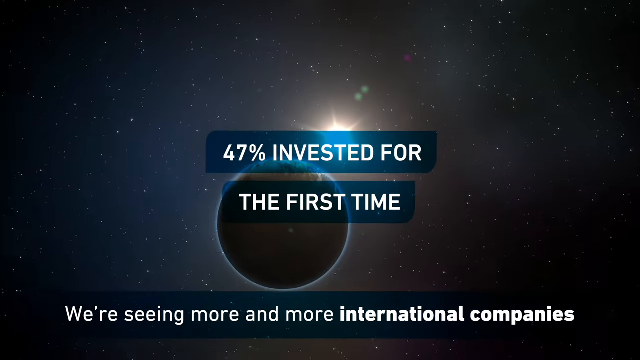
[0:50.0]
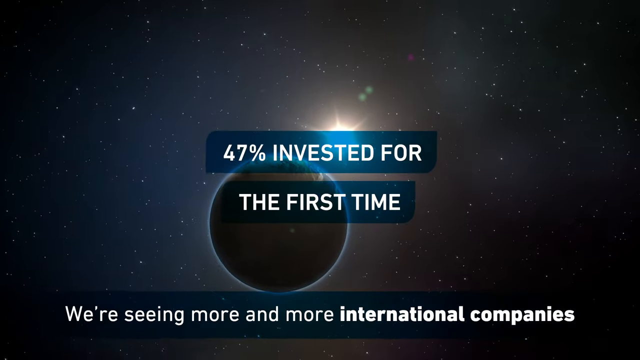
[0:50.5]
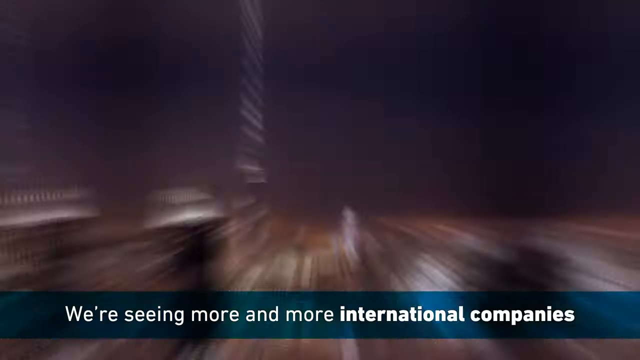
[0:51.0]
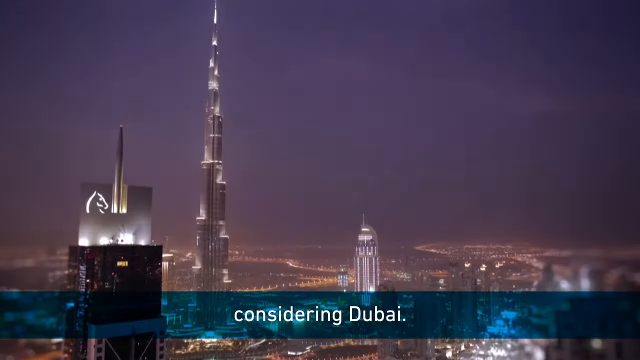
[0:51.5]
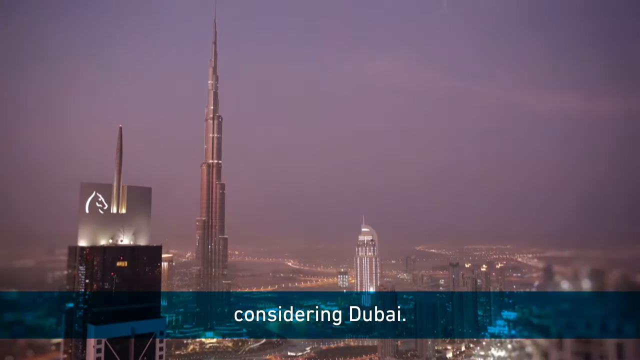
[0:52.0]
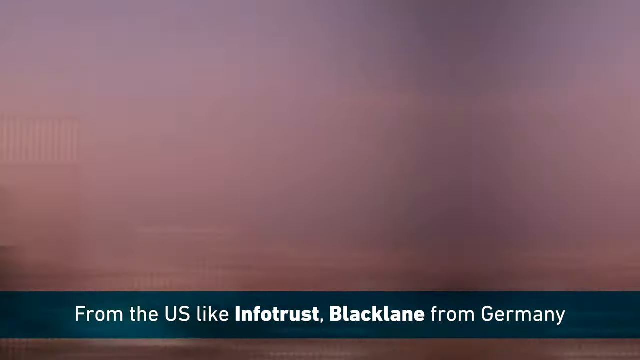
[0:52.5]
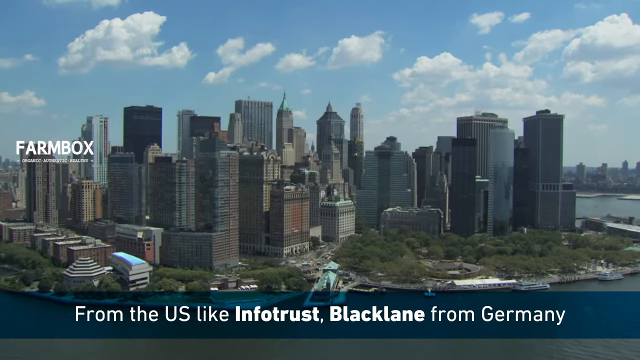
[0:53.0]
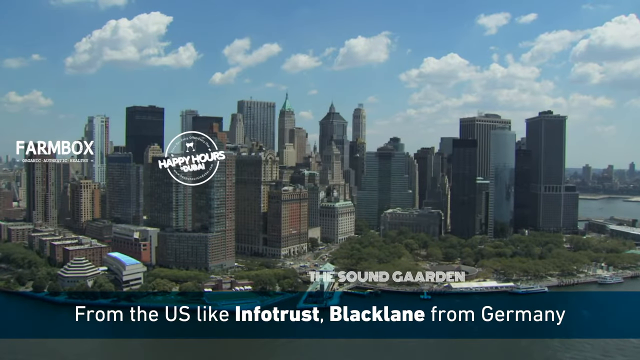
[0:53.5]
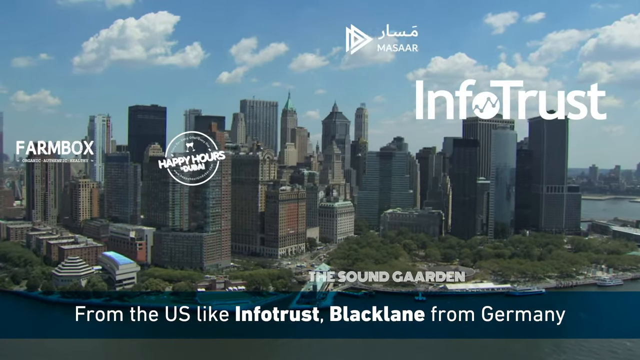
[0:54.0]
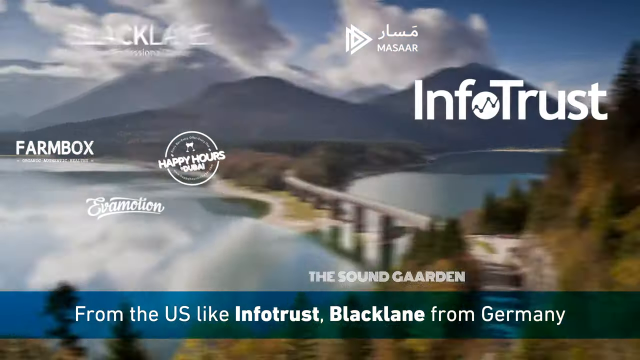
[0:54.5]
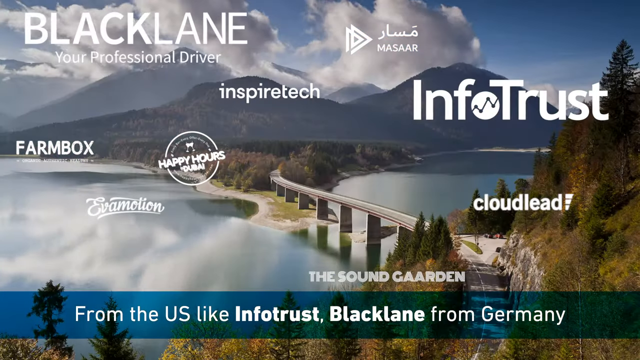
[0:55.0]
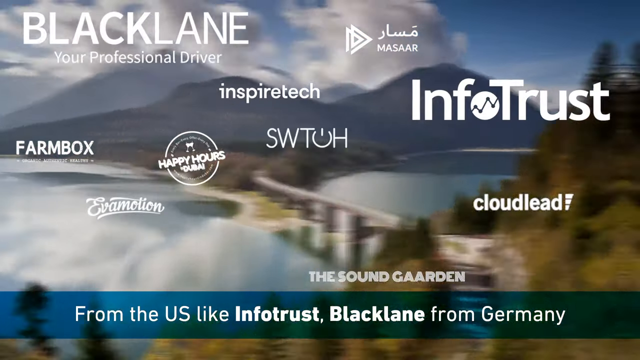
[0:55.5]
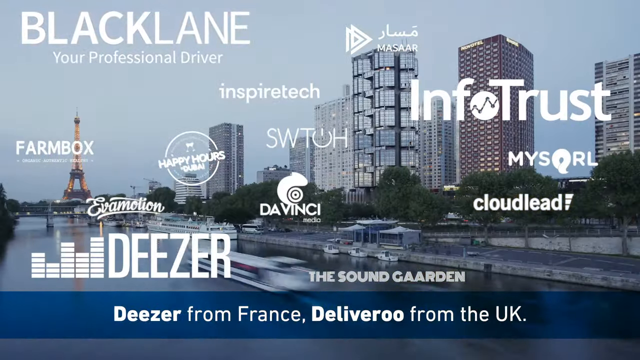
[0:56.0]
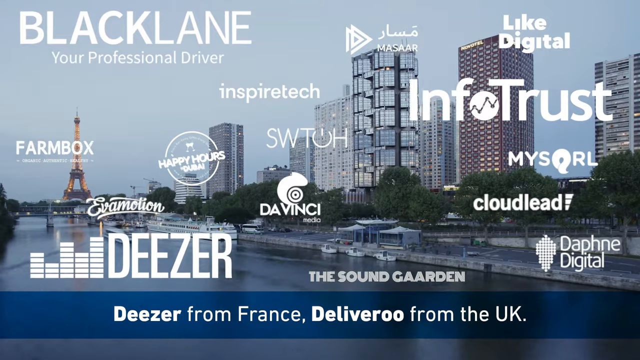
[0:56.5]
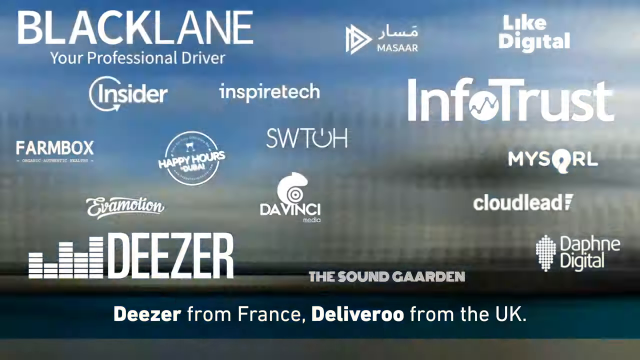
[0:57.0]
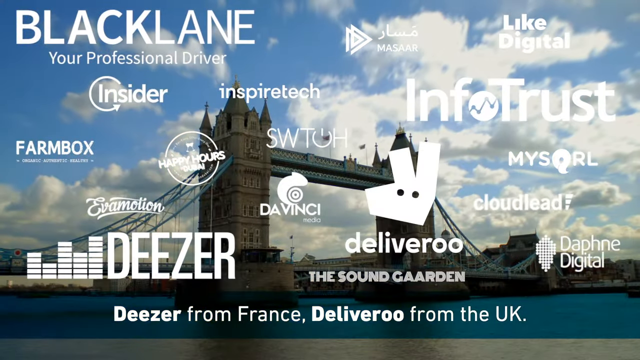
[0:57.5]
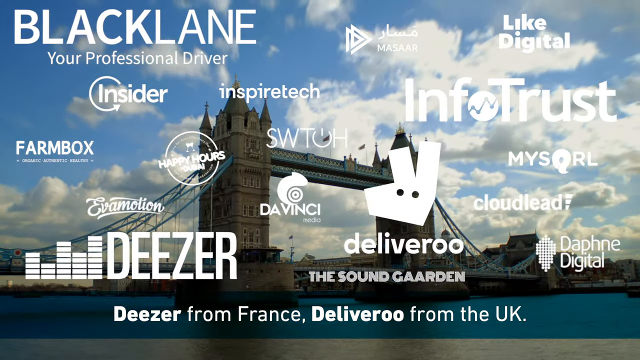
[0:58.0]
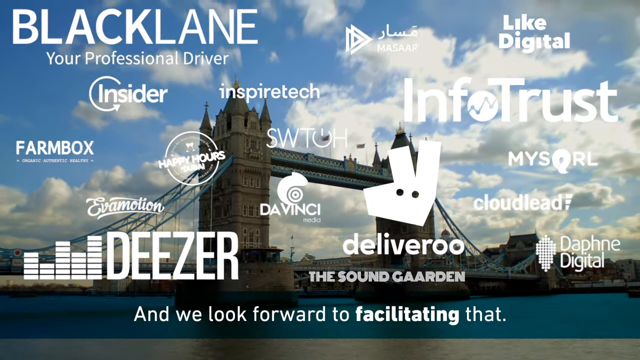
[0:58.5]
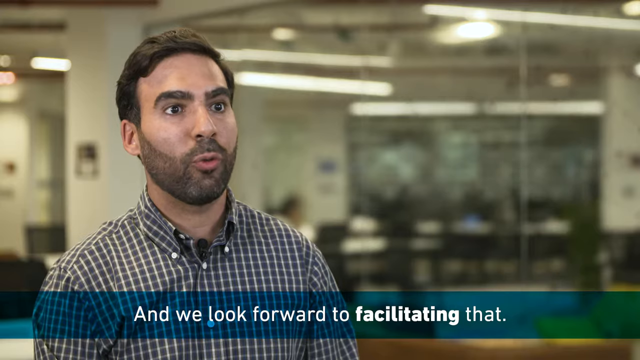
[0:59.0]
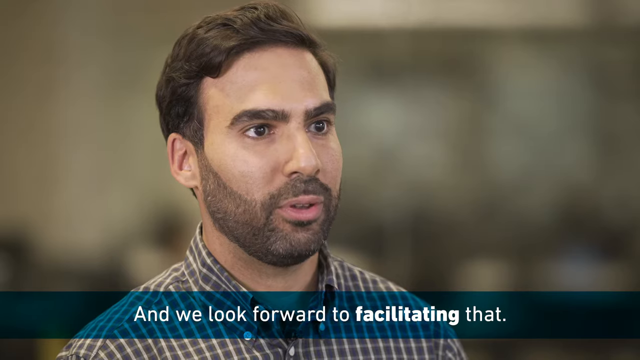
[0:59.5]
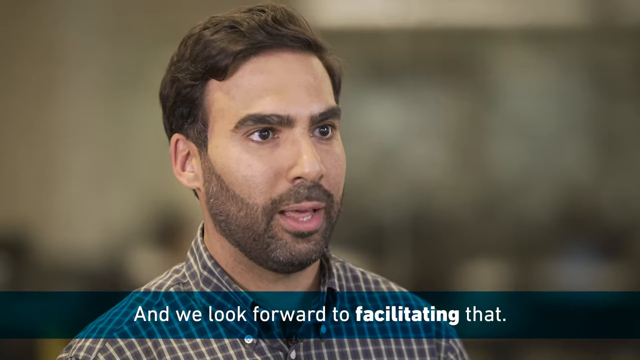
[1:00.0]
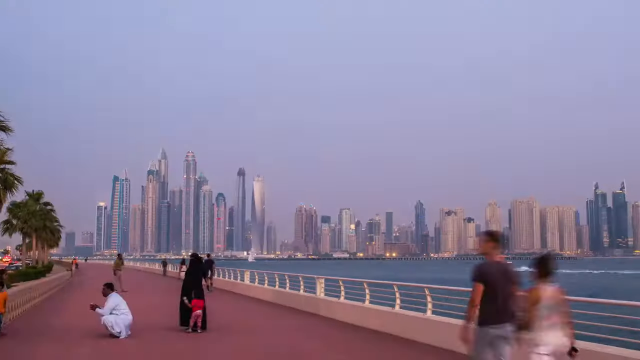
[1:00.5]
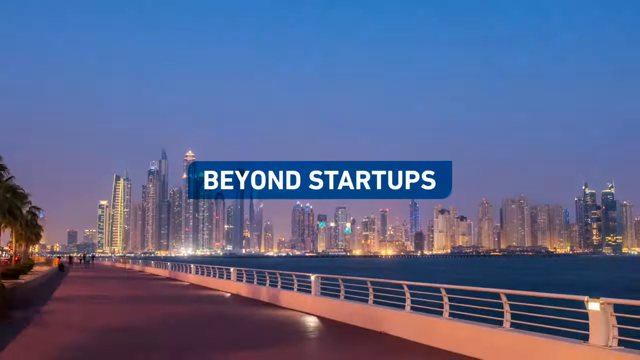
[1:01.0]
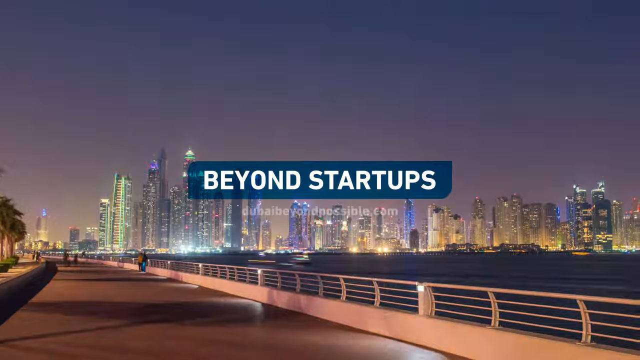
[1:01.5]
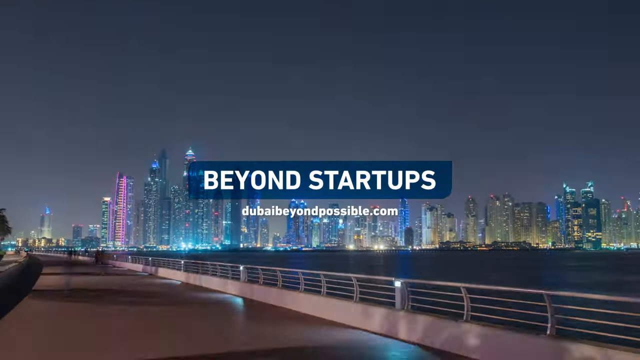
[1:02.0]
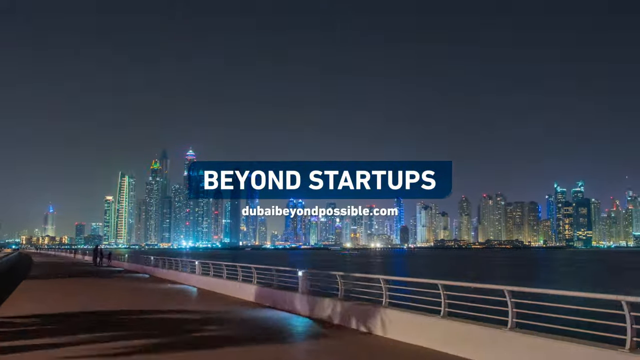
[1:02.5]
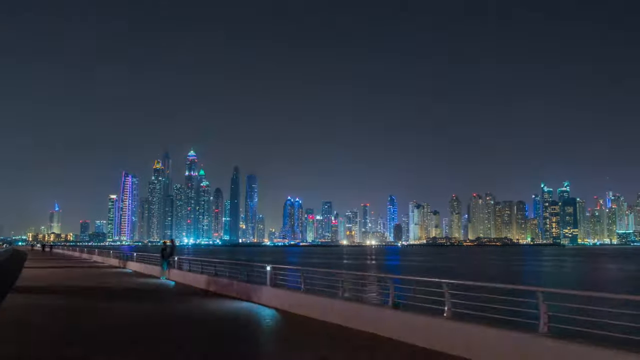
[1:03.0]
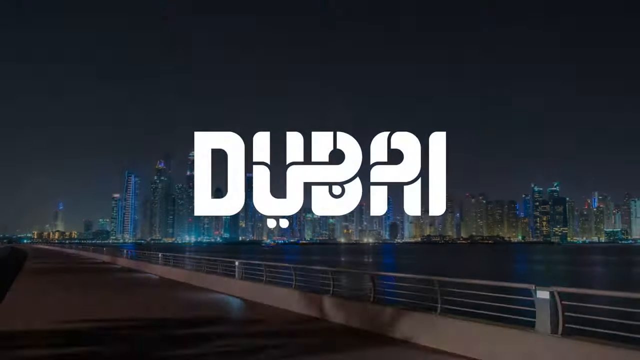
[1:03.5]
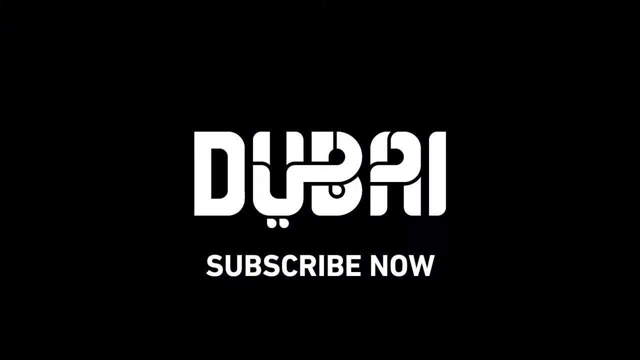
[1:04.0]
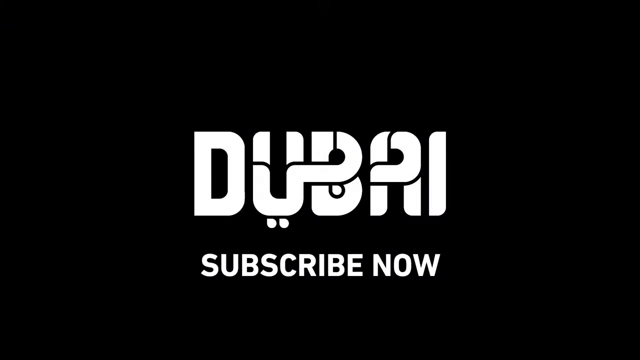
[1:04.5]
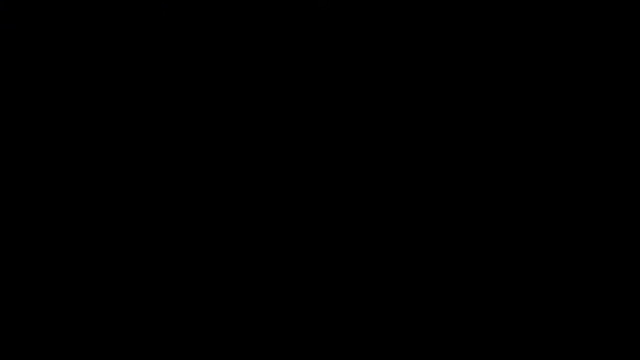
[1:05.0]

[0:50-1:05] The video continues with companies considering Dubai from the U.S., like InfoTrust, and BlackLane from Germany. A series of company examples pops up: InfoTrust, BlackLane with "your professional driver," Massar, InspireTech, Happy Hours Dubai, Farmbox, EvaMotion, The Sound Garden, Cloud Lead, Swatow, Deezer, MySquirrel, DaVinci, Daphne Digital, Insider, InspireTech, and Deliveroo. The AstroLabs representative says, "we look forward to facilitating that beyond startups," followed by "Dubai, beyond possible" and "subscribe now."